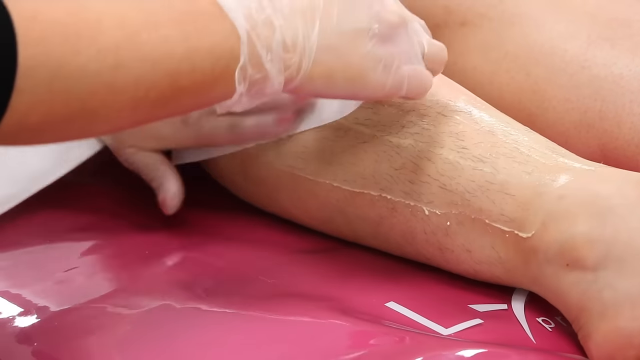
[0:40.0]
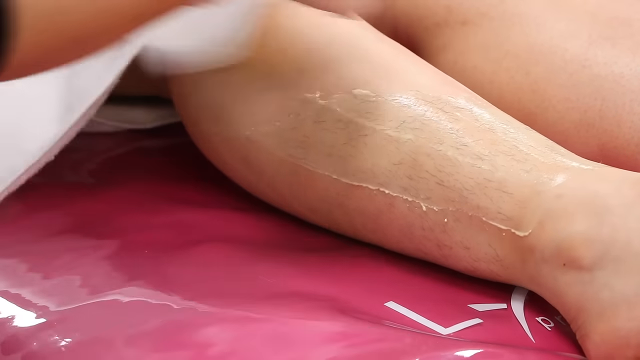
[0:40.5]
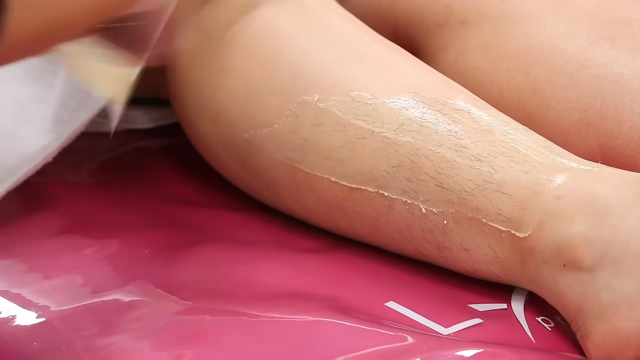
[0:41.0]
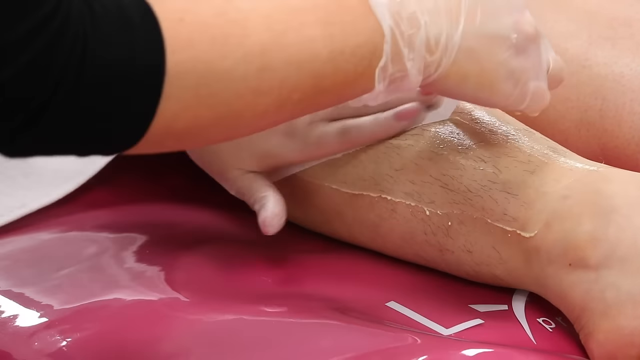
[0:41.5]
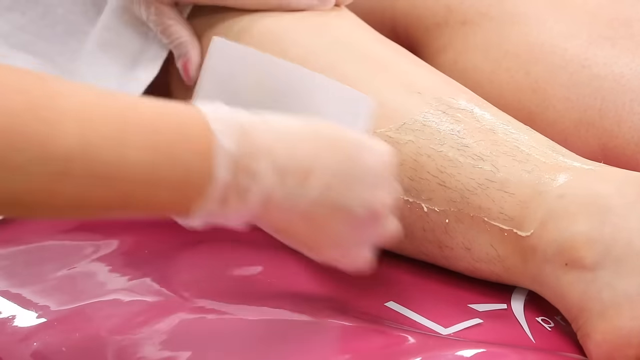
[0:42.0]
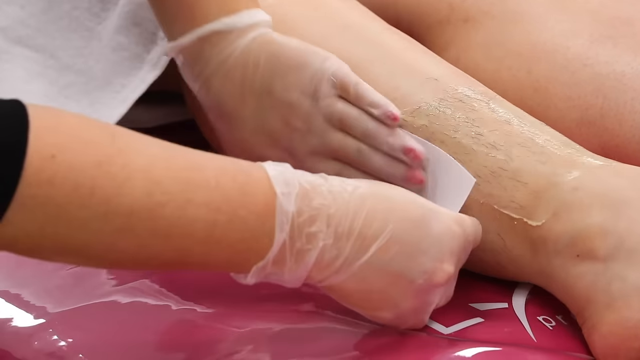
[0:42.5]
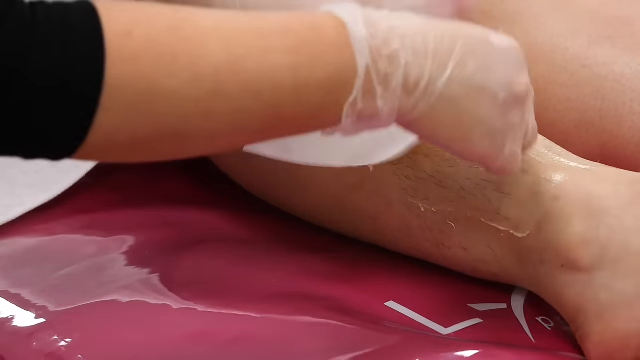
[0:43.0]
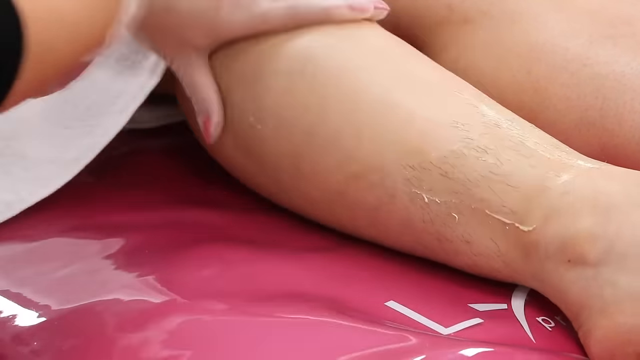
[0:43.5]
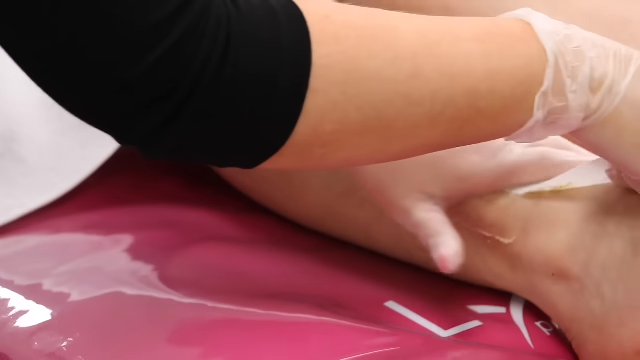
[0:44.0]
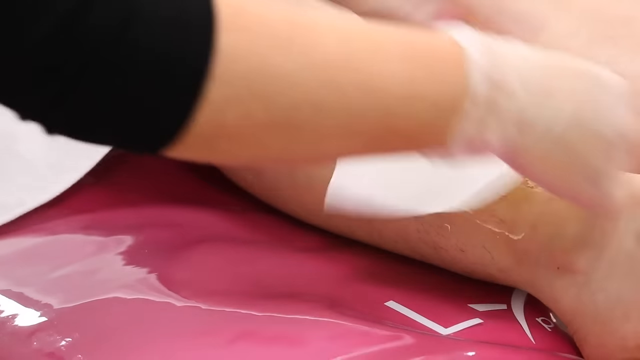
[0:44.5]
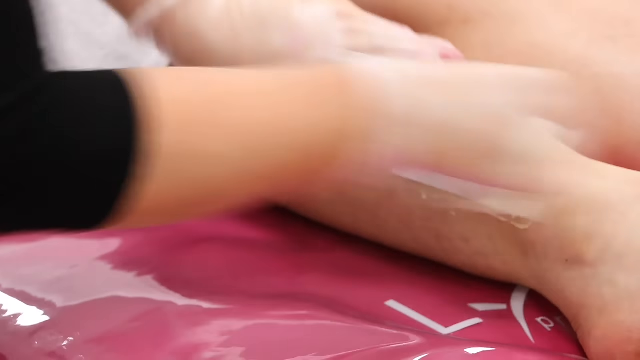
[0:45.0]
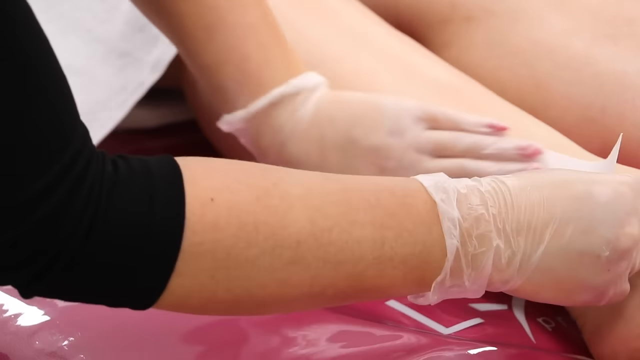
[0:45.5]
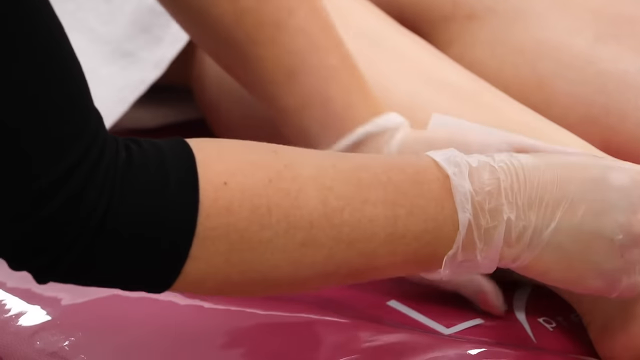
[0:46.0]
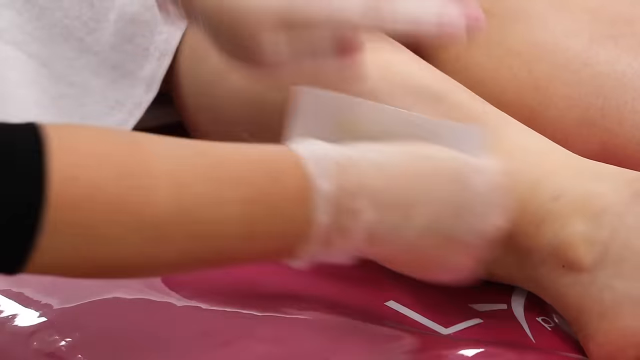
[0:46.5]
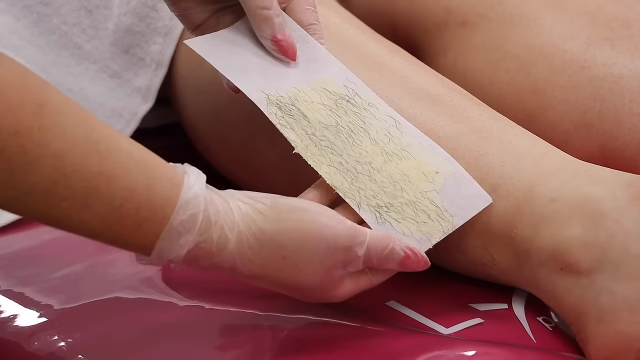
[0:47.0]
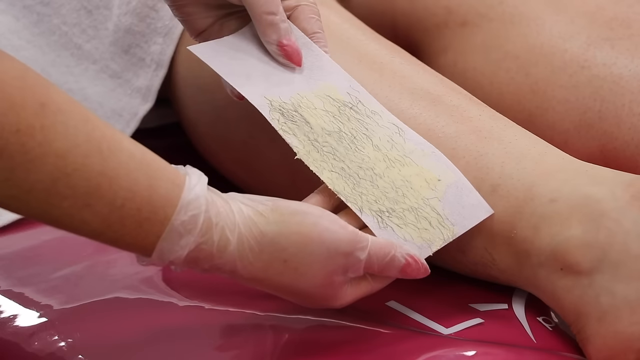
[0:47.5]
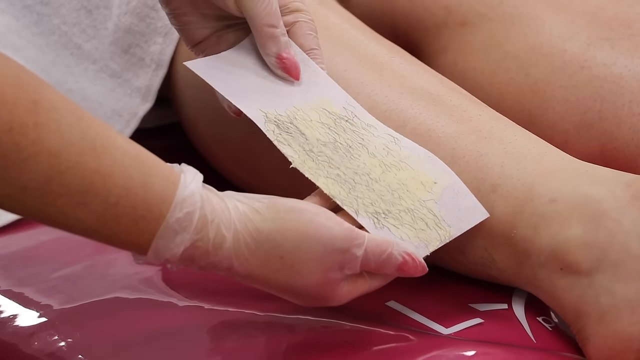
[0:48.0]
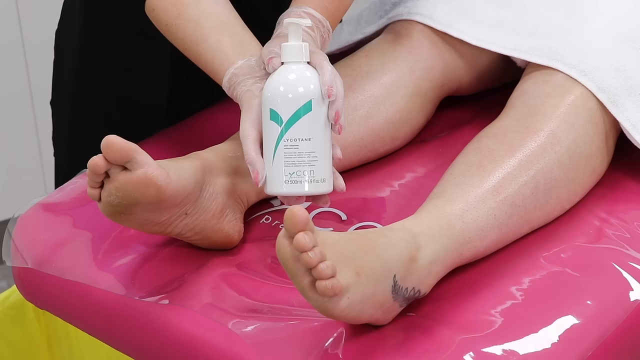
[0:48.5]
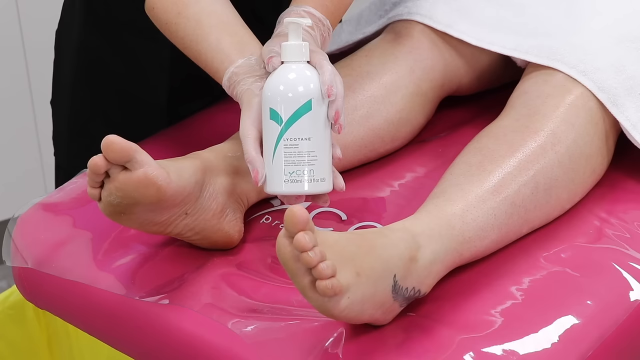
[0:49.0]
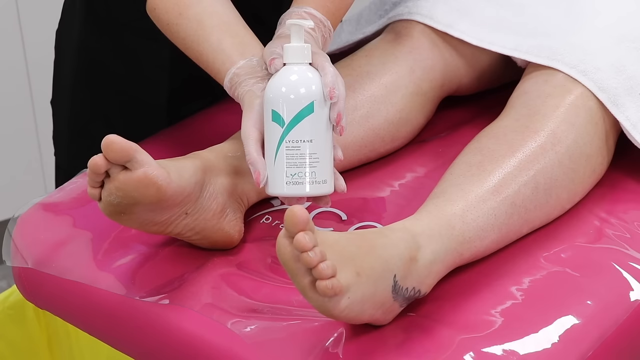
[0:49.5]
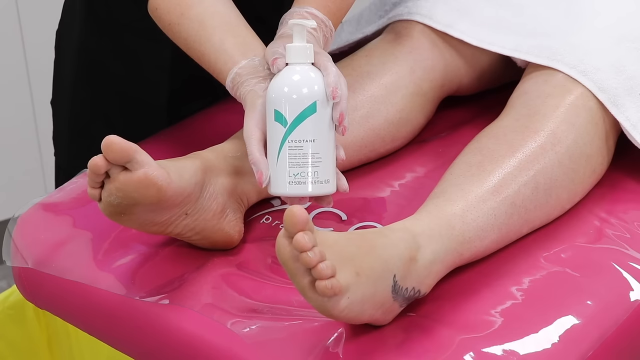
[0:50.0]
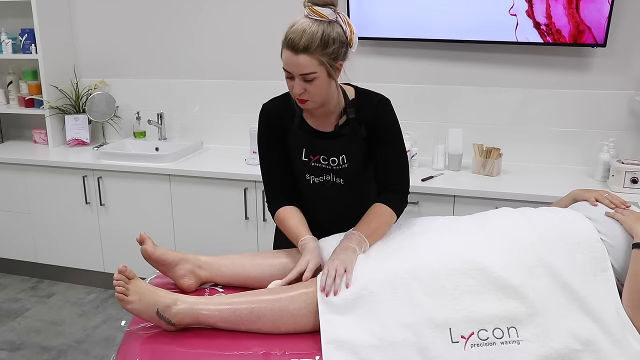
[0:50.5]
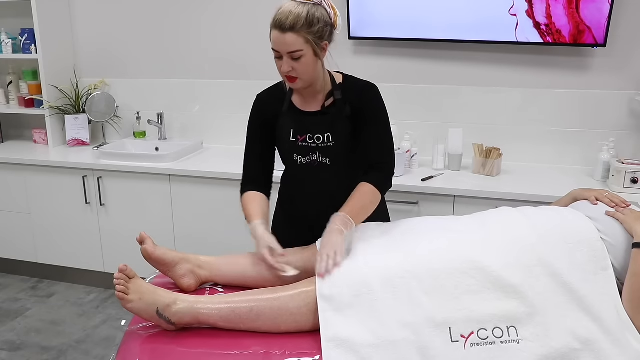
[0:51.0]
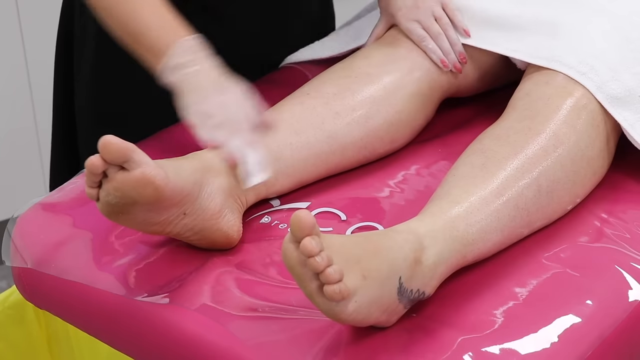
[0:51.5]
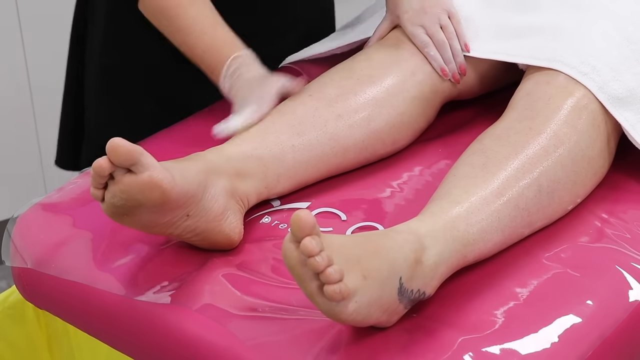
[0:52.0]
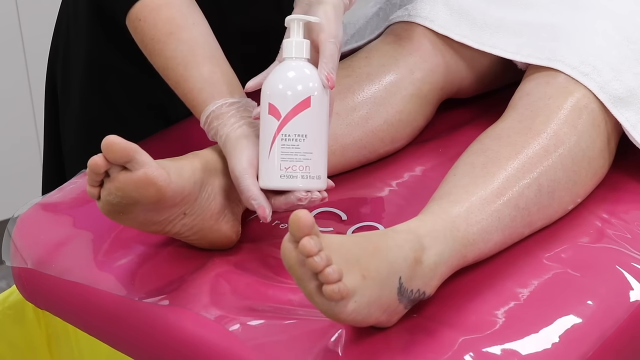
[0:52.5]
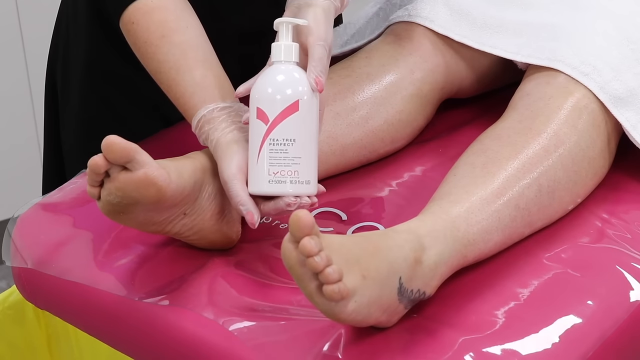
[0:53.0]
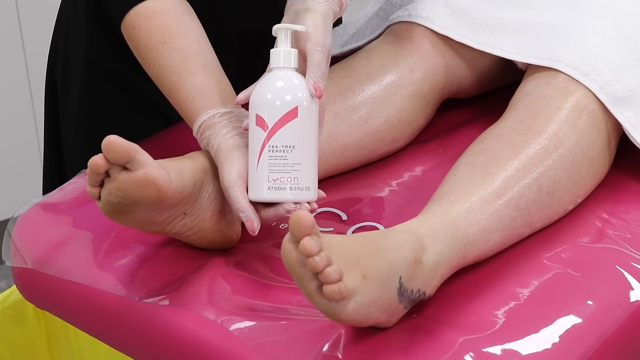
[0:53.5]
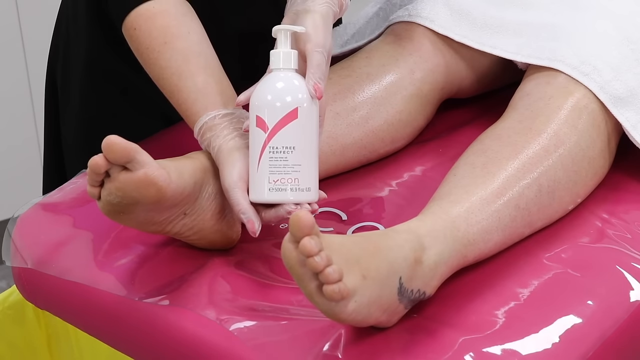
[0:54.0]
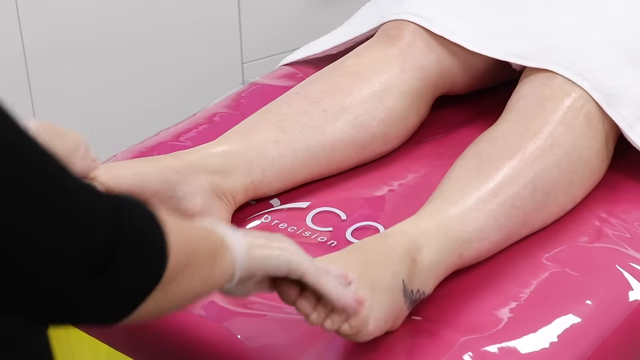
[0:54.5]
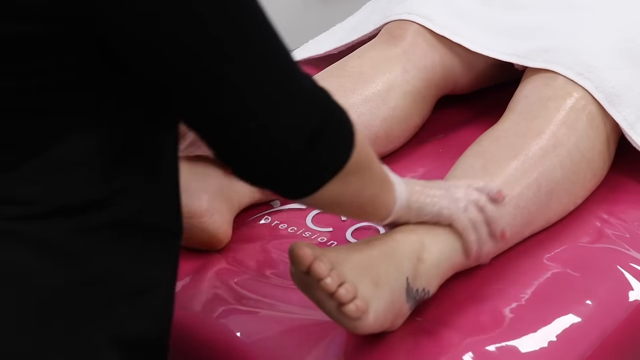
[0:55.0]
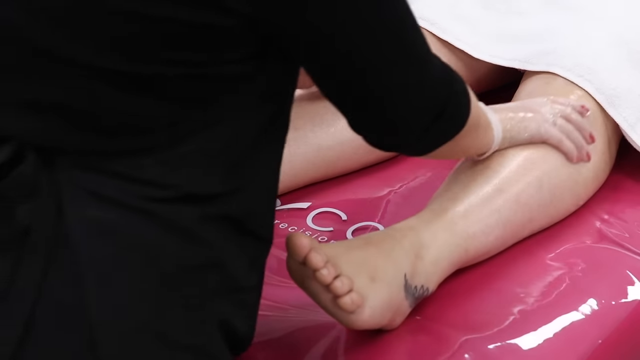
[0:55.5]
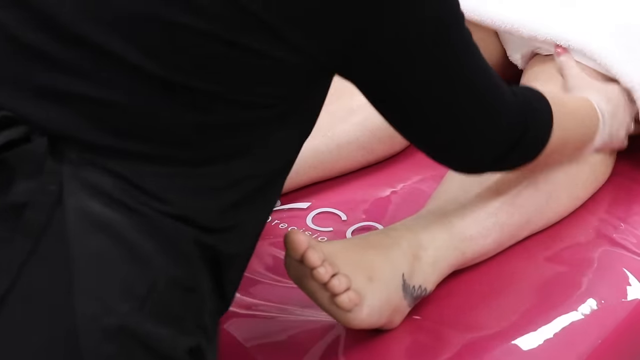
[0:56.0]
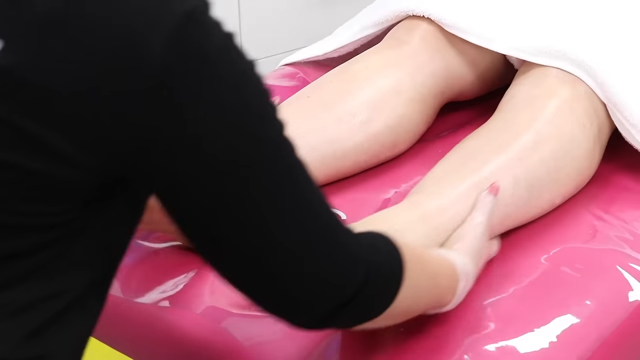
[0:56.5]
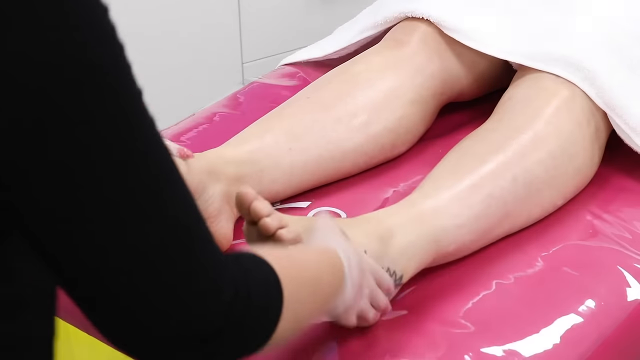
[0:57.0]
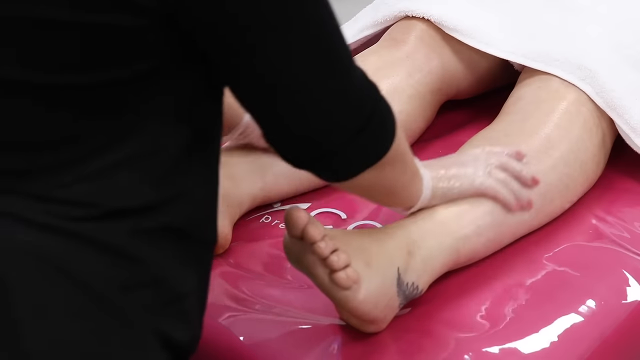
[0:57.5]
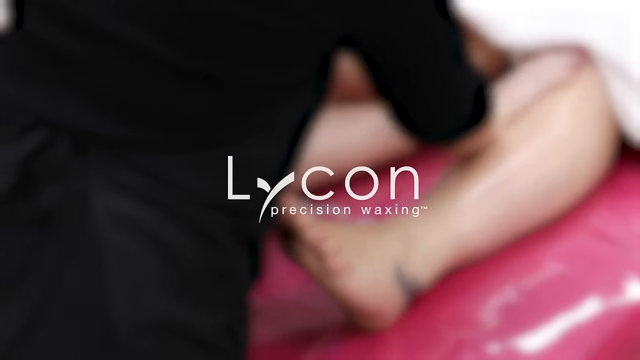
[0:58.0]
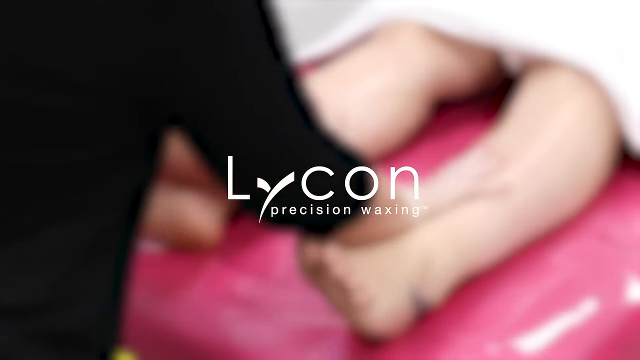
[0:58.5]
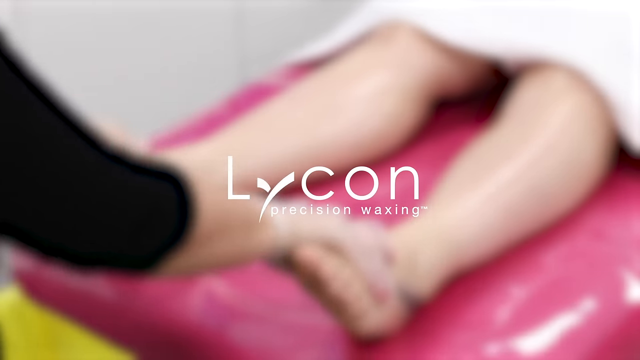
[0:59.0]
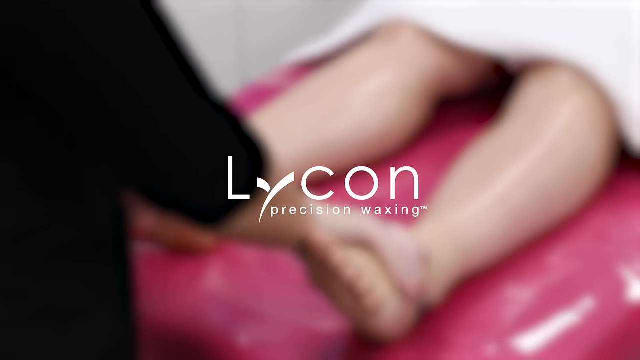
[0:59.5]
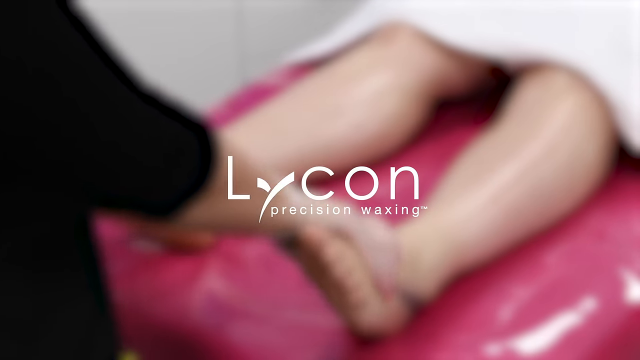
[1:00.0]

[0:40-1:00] The woman removes the hair with the tape very quickly and shows the tape with all the removed hair. She applies Licon Tea Tree Perfect hair removal oil, spreading it onto the person's legs. Hair removal from the other leg is not shown. She firmly presses the masking tape all over the person's leg. She has red nails. The person being waxed has a eucalyptus leaf tattoo on their left ankle, and the board of the massage chair is pink.